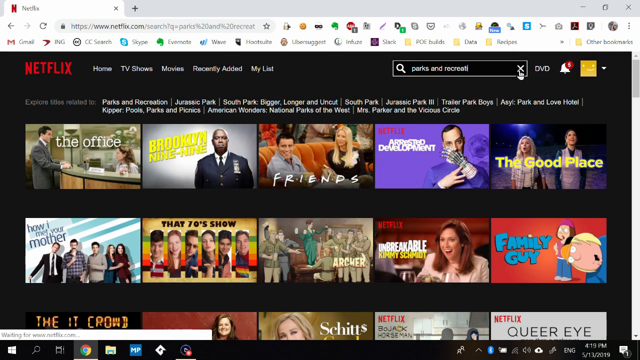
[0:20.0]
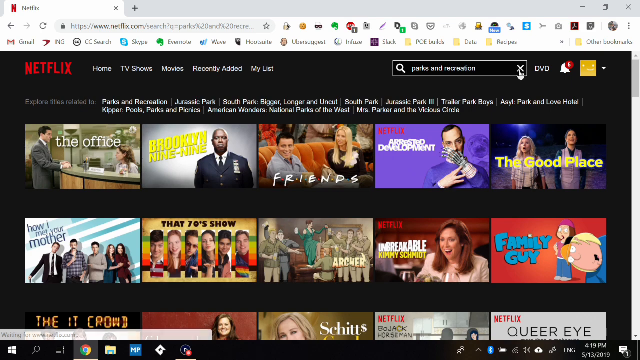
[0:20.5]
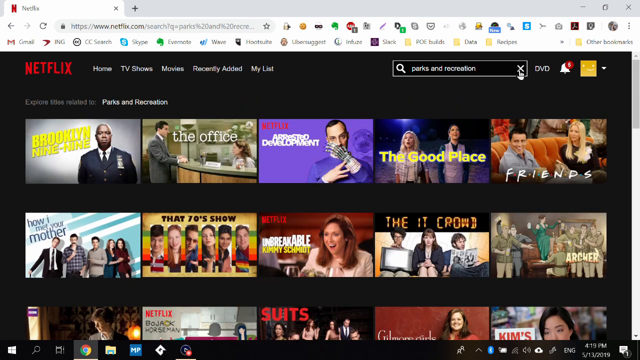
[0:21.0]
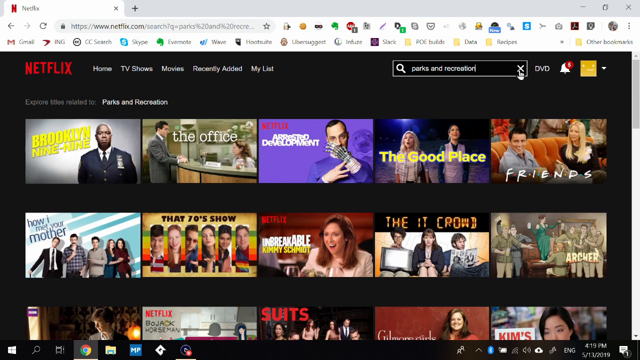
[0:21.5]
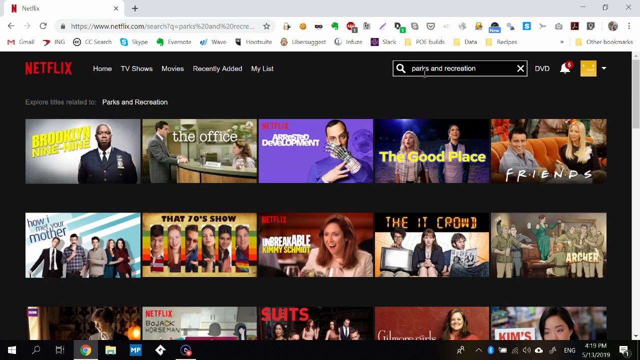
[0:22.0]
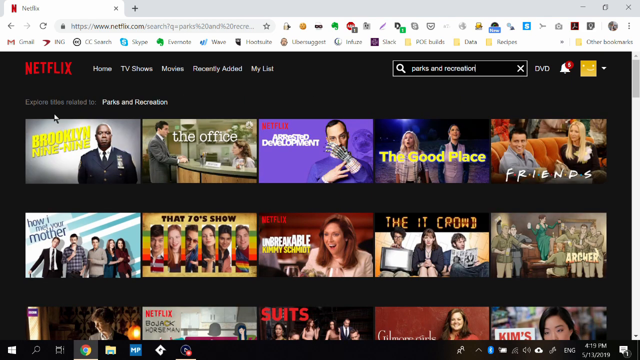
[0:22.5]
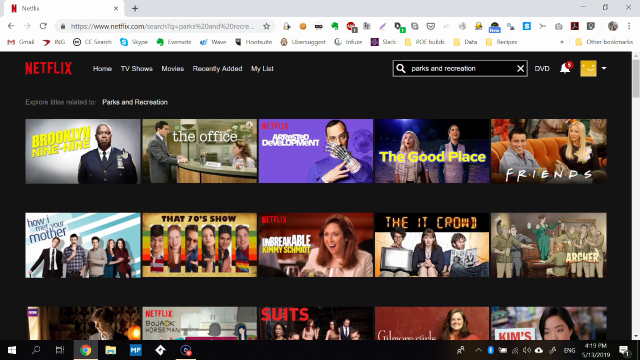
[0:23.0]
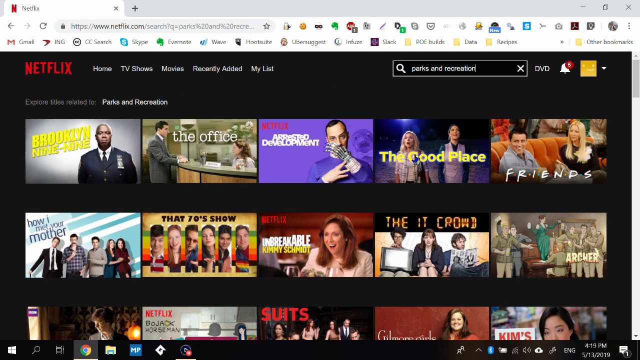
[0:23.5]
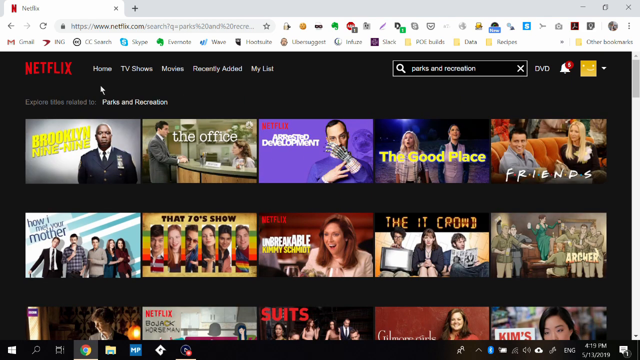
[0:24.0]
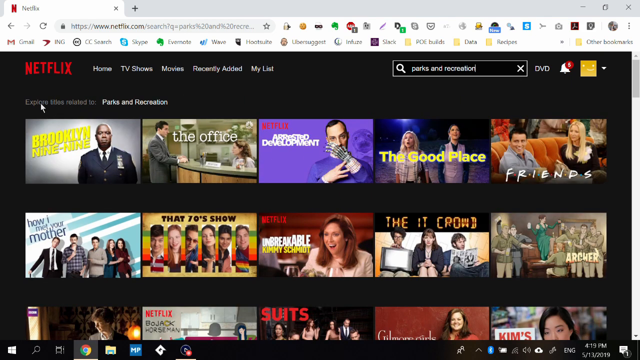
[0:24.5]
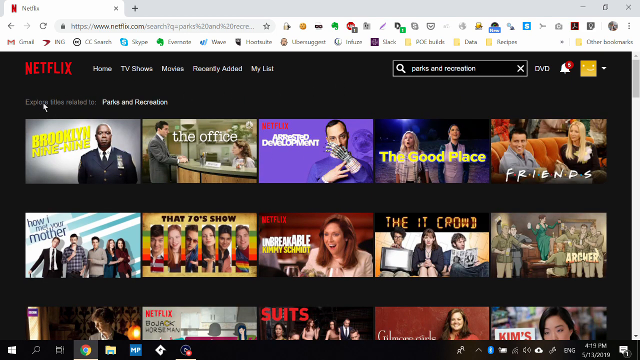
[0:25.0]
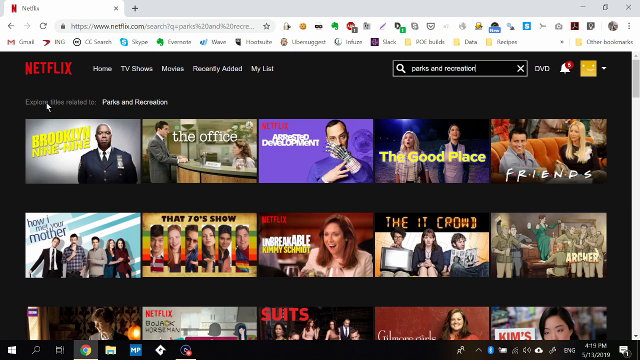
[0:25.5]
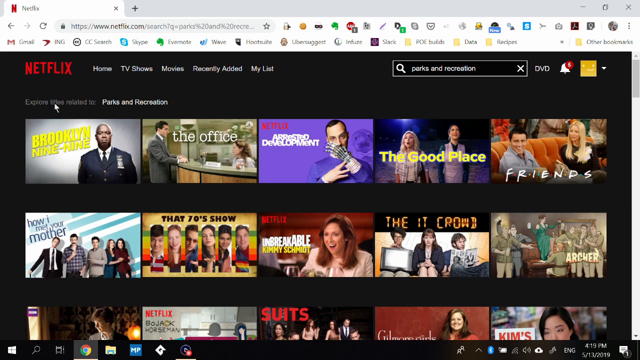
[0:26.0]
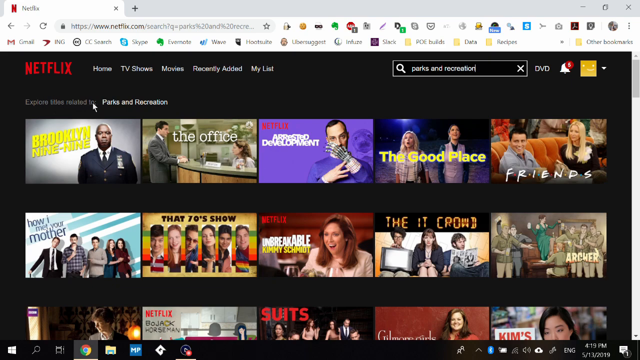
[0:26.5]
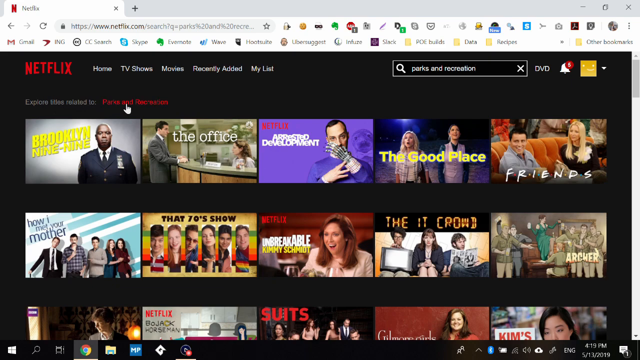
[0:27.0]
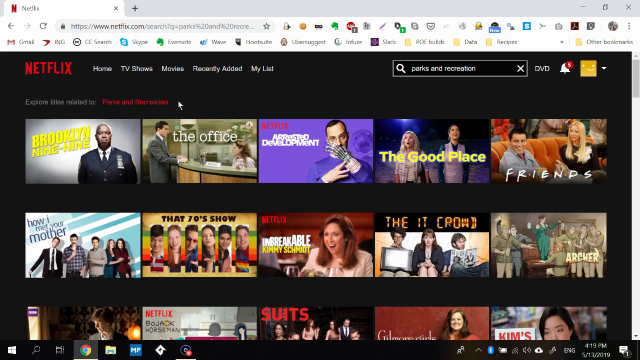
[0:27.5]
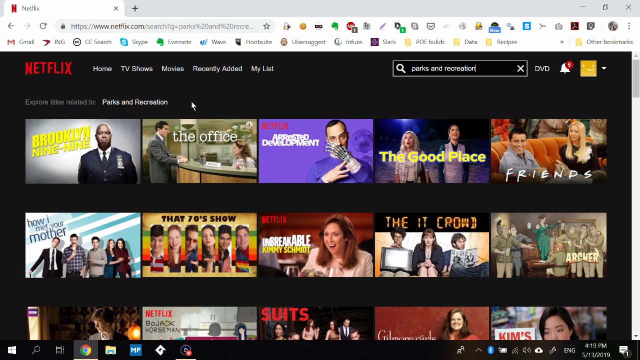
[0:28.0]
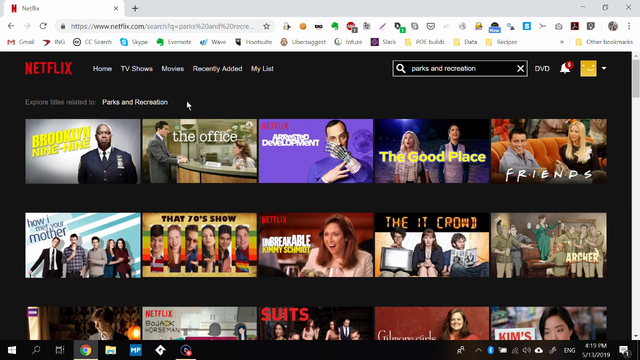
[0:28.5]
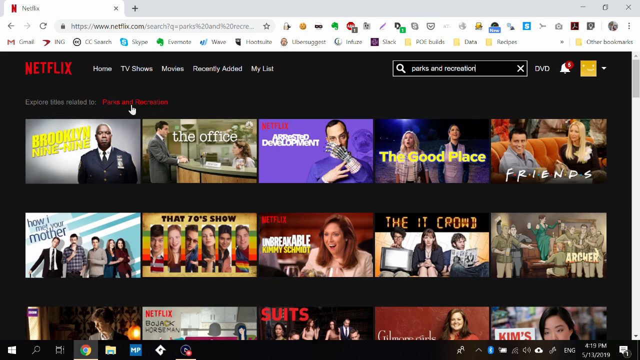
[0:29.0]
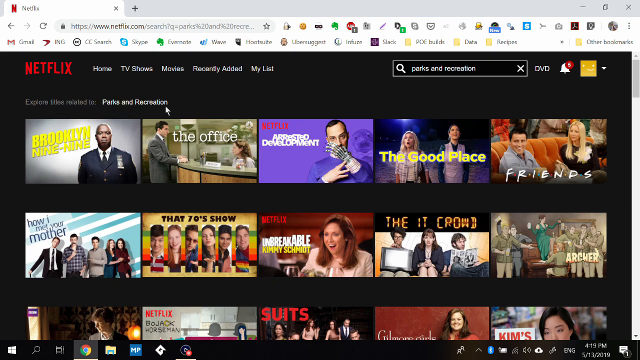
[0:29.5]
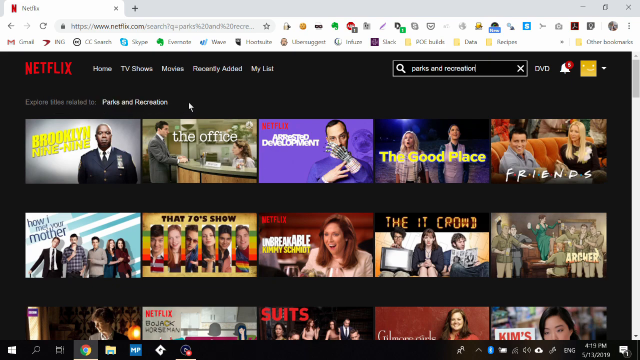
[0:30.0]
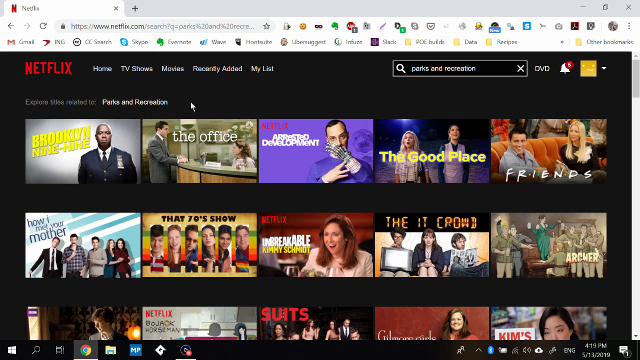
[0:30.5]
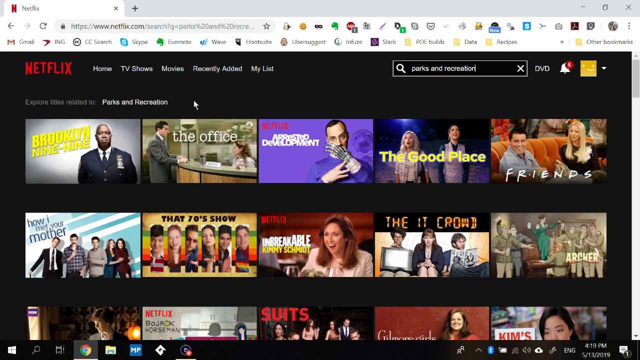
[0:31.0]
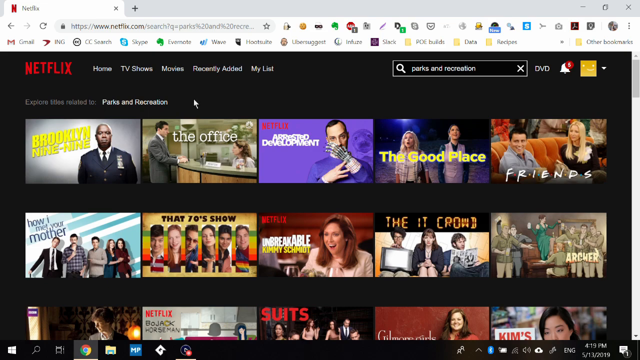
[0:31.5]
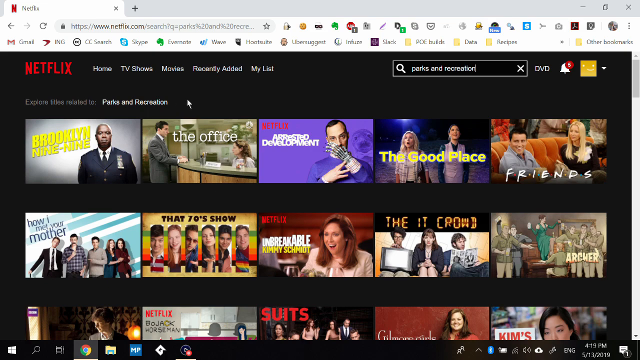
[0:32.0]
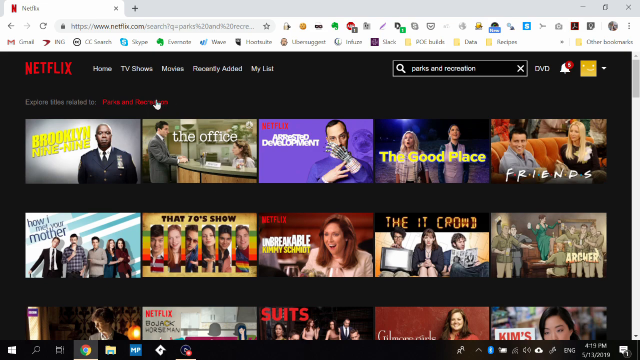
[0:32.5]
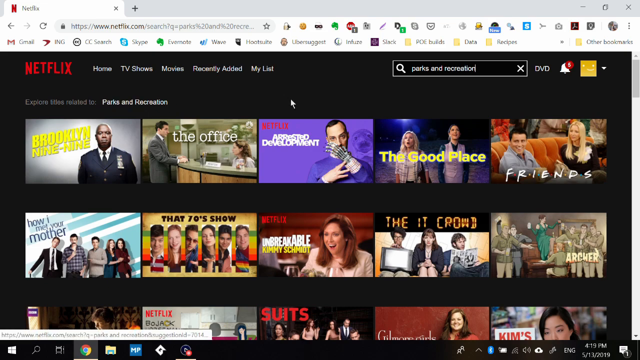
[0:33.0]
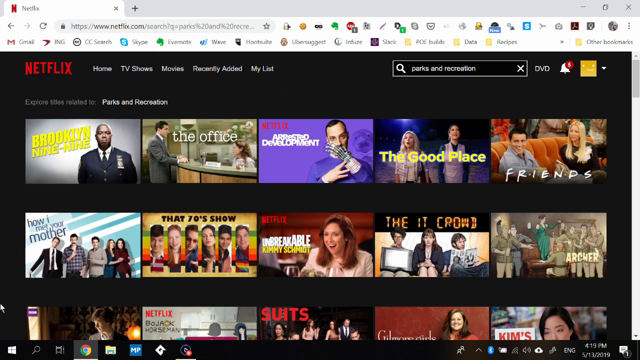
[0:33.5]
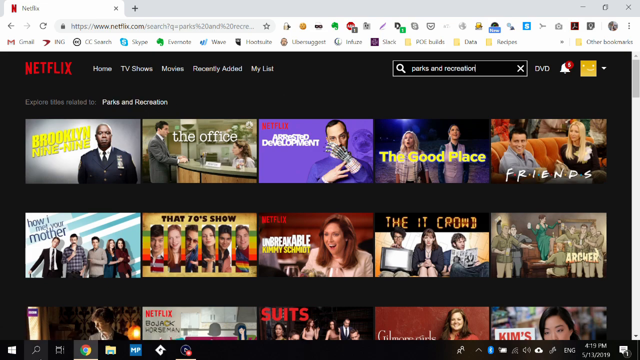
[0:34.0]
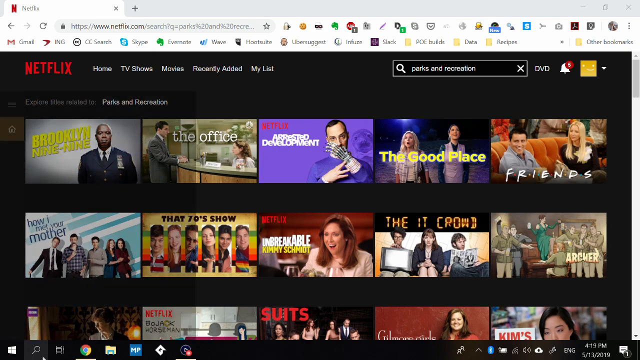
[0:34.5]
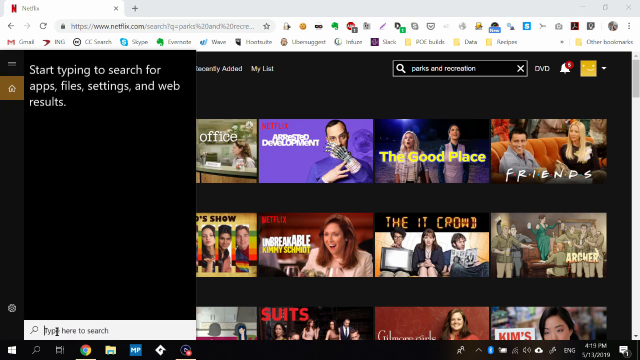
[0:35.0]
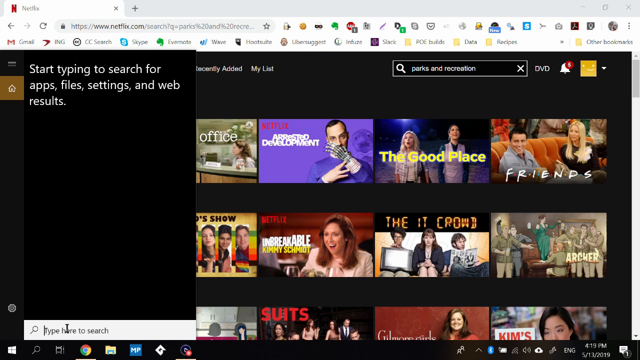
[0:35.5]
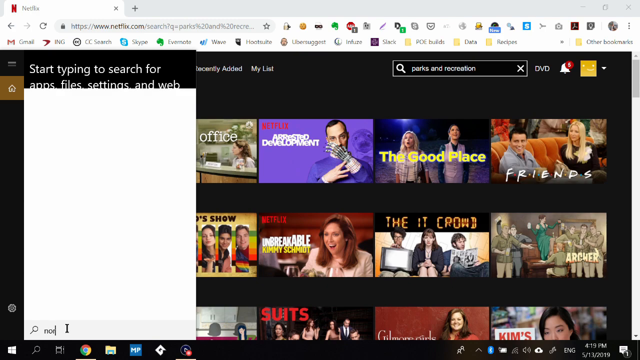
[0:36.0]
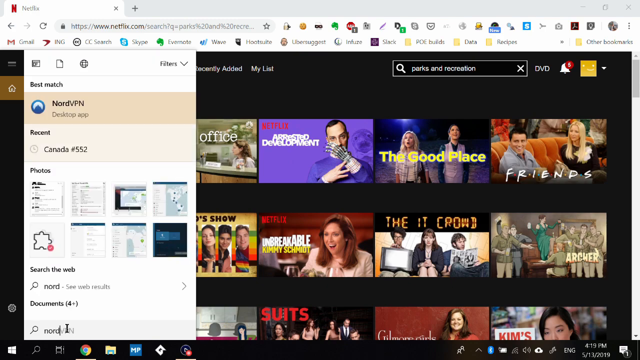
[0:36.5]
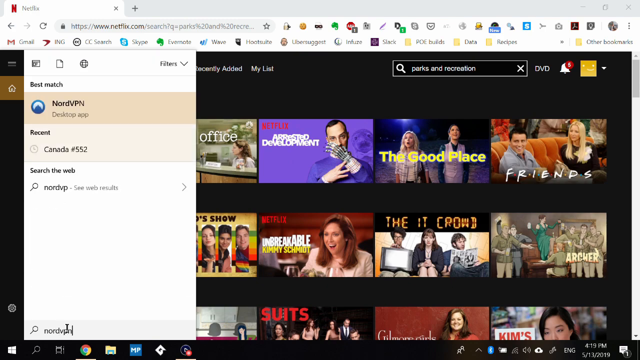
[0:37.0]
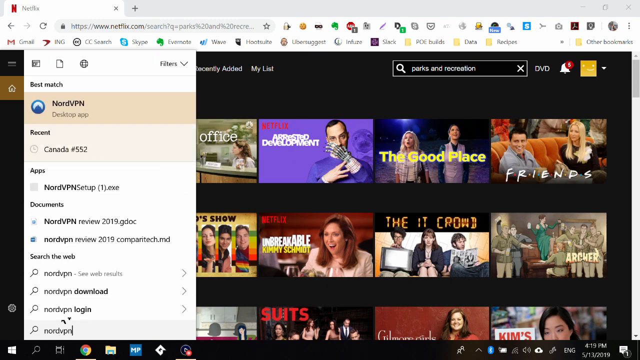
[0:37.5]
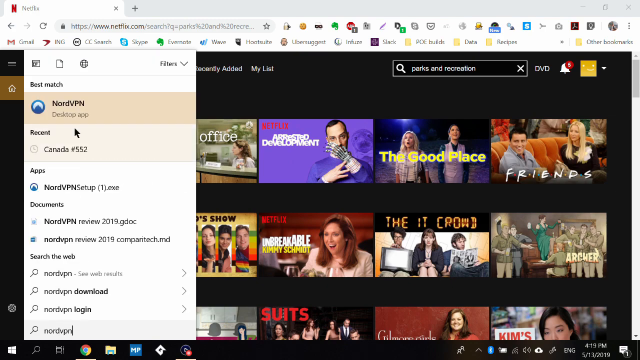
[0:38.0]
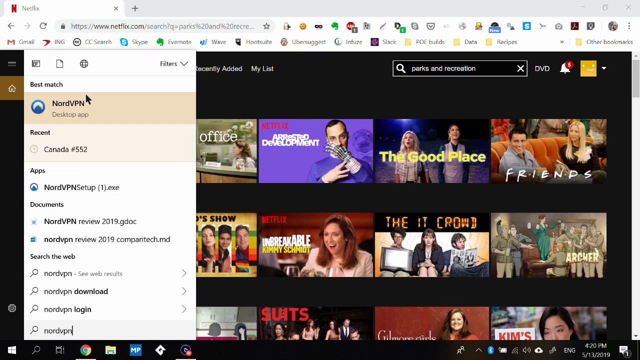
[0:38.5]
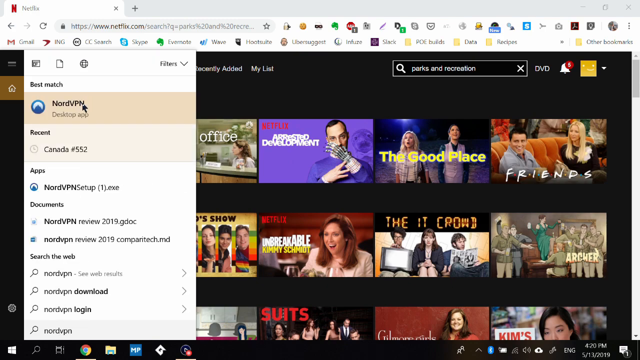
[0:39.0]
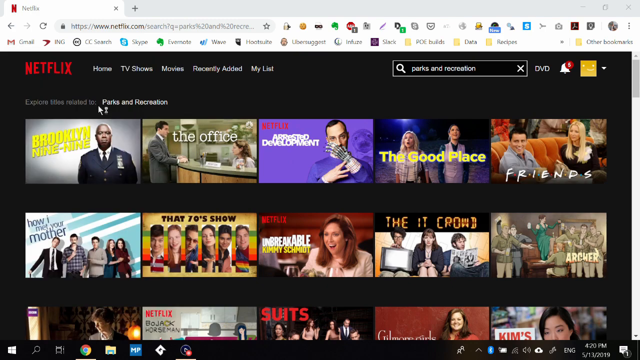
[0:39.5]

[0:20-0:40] After a search is typed on the screen, many related results appear, including a lot of episodes and many funny episodes. The mouse keeps moving around to explore the results. Mr. Bean is among the many movies visible on the screen.